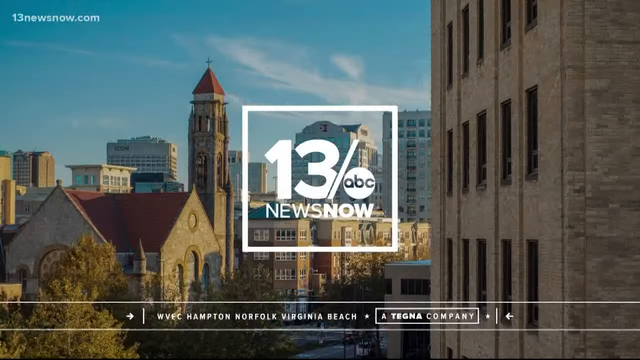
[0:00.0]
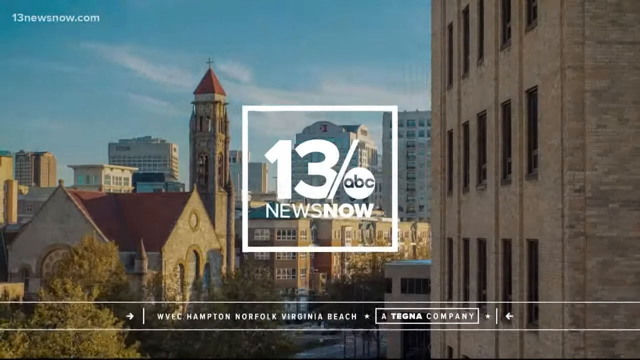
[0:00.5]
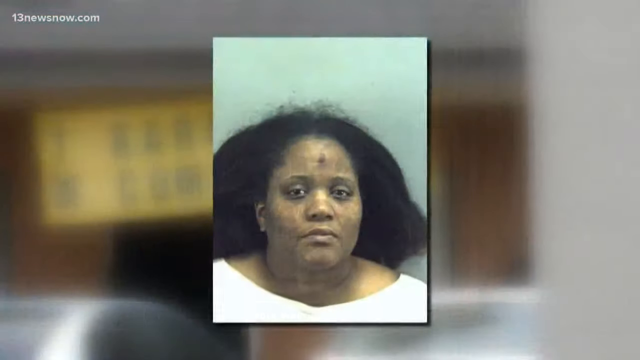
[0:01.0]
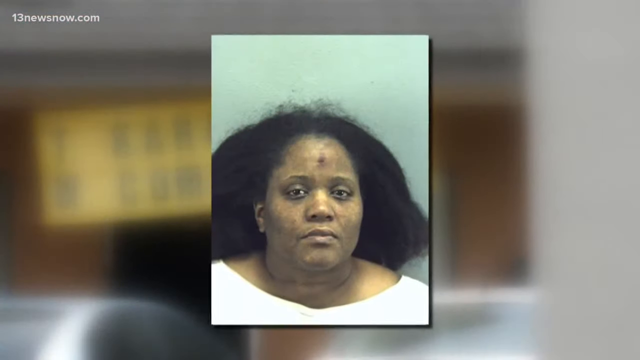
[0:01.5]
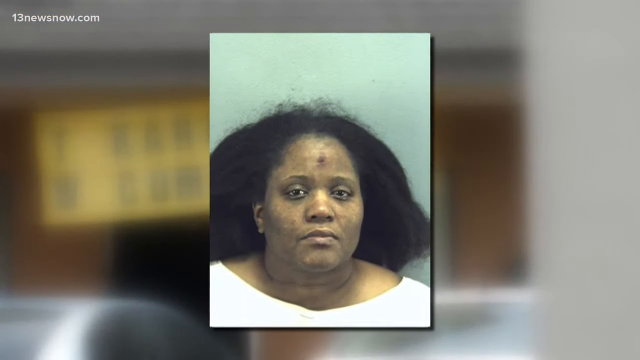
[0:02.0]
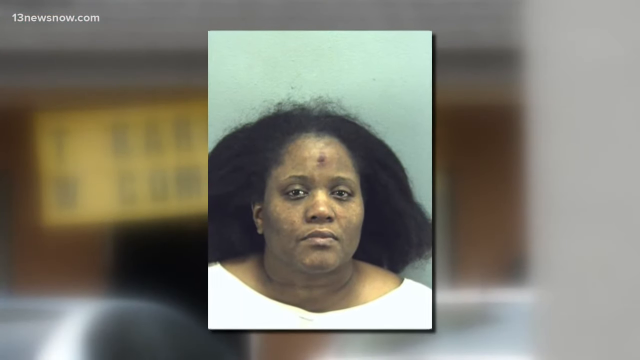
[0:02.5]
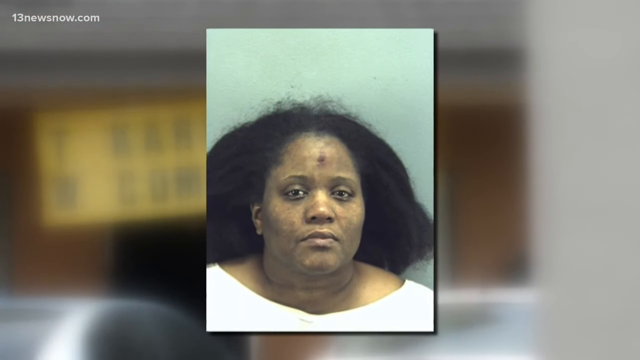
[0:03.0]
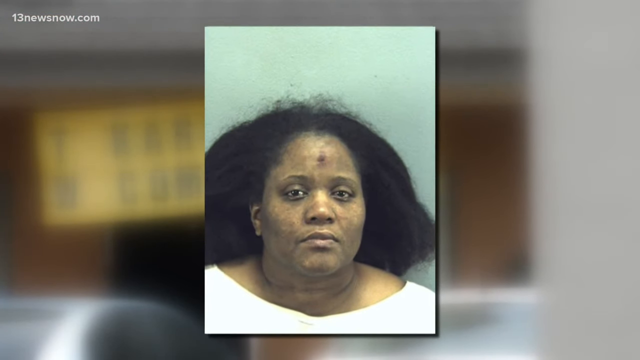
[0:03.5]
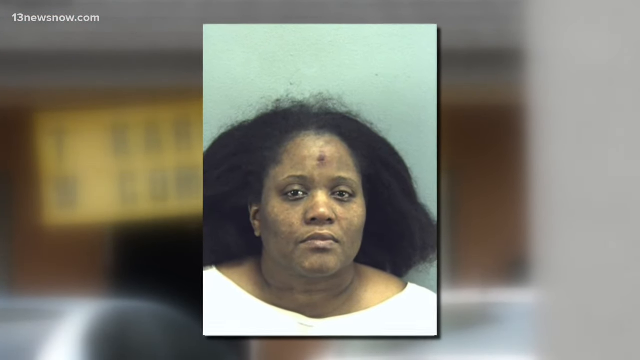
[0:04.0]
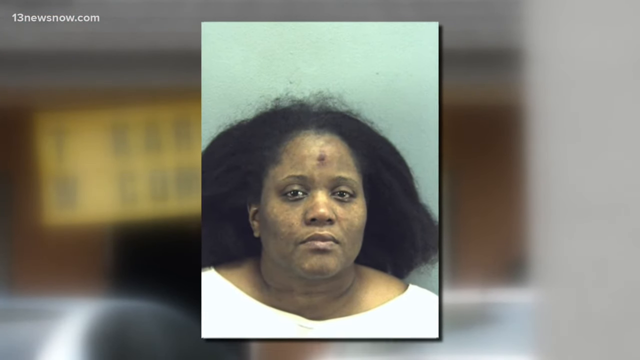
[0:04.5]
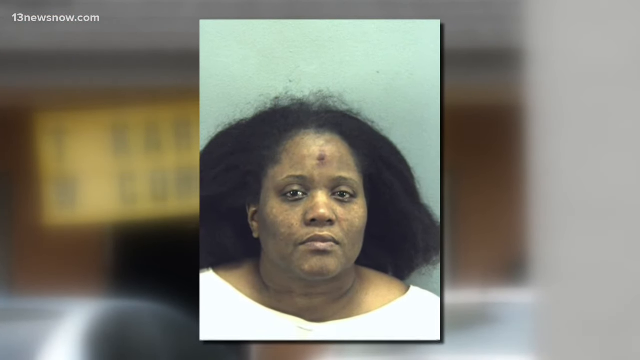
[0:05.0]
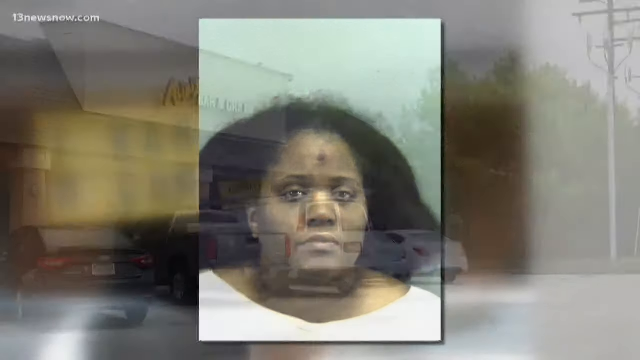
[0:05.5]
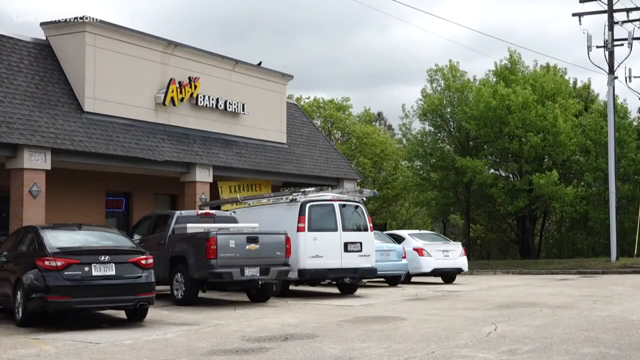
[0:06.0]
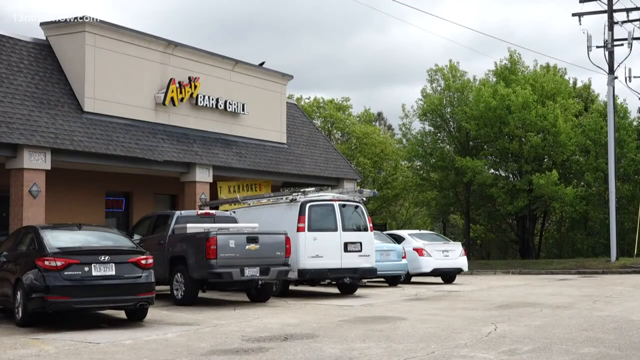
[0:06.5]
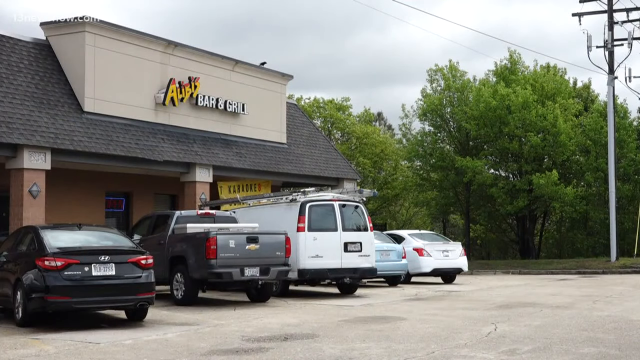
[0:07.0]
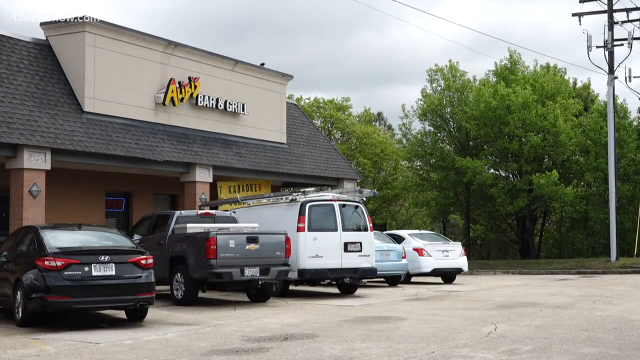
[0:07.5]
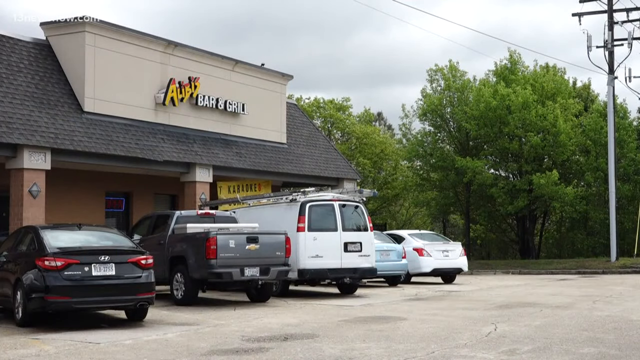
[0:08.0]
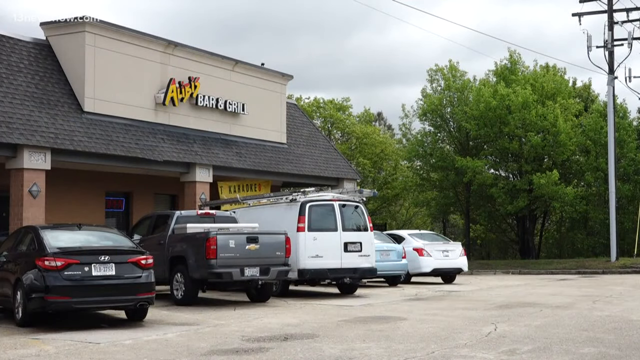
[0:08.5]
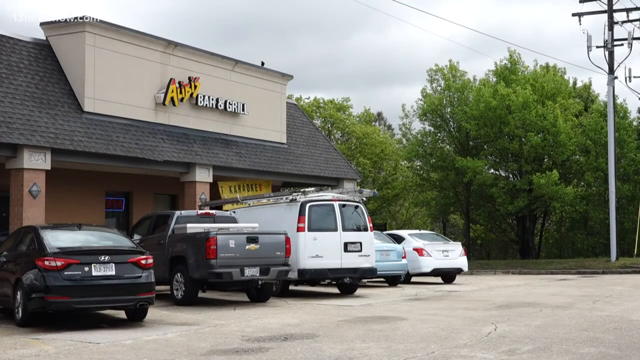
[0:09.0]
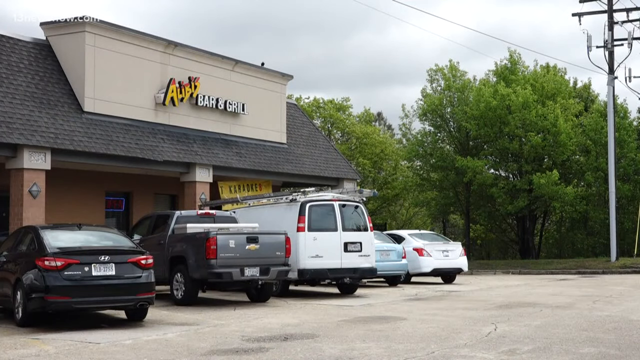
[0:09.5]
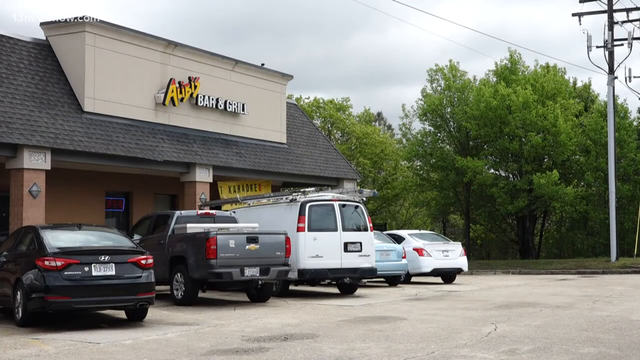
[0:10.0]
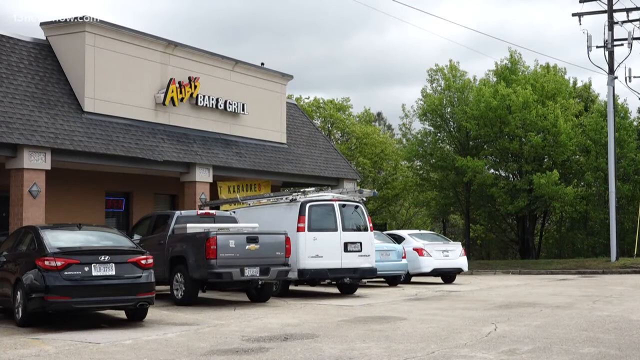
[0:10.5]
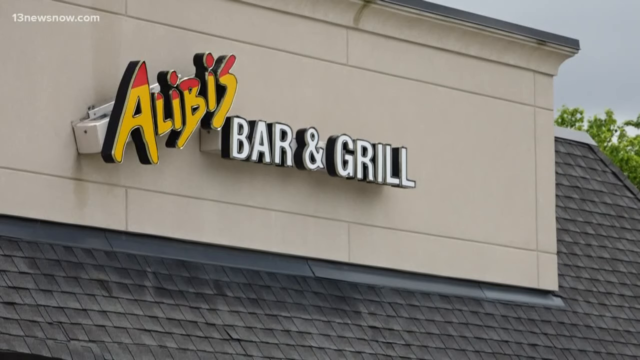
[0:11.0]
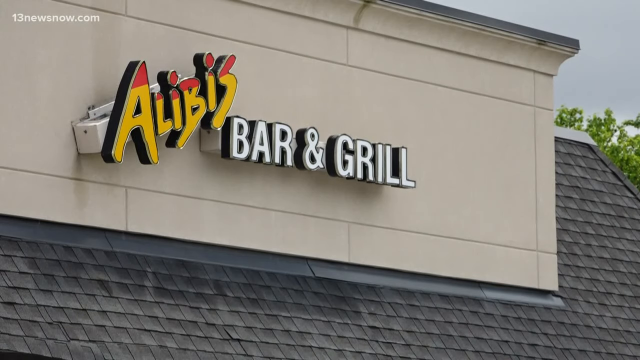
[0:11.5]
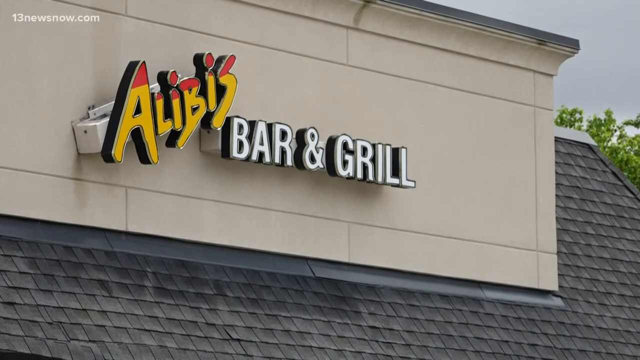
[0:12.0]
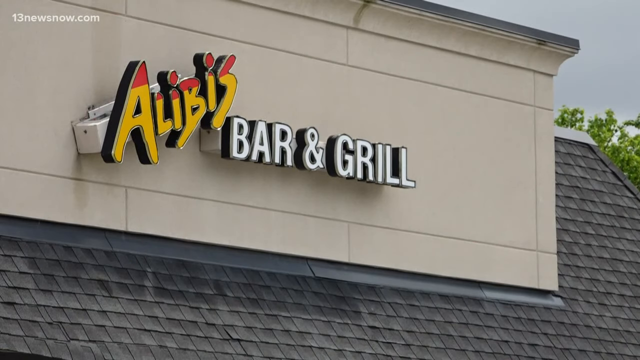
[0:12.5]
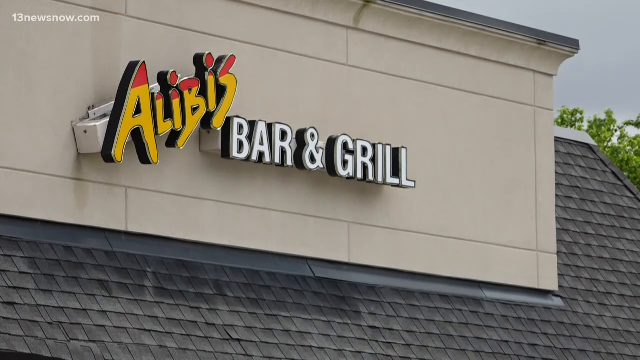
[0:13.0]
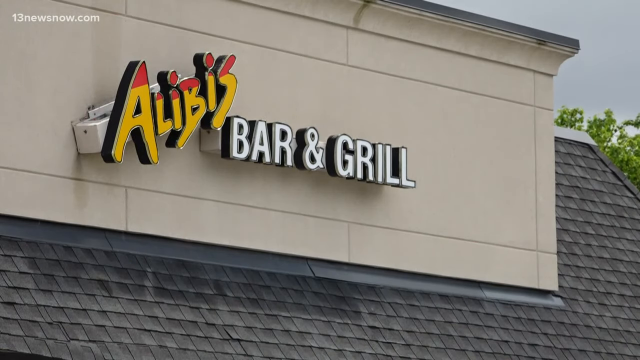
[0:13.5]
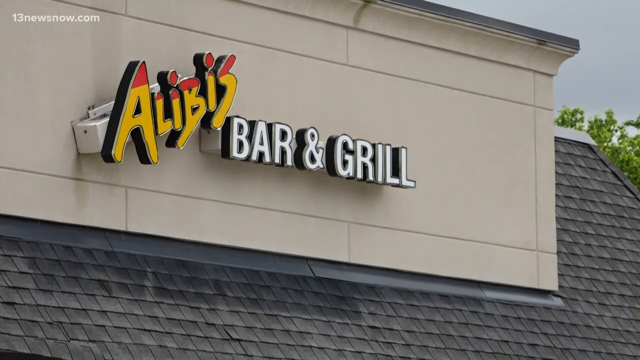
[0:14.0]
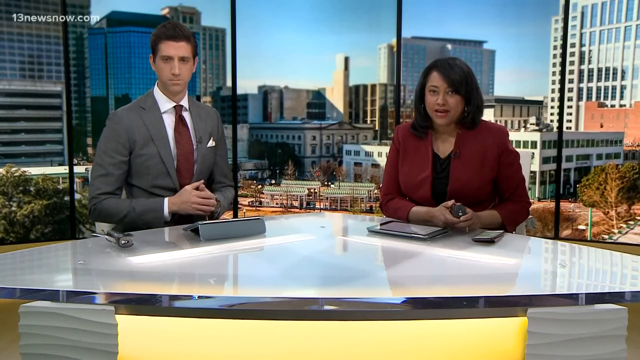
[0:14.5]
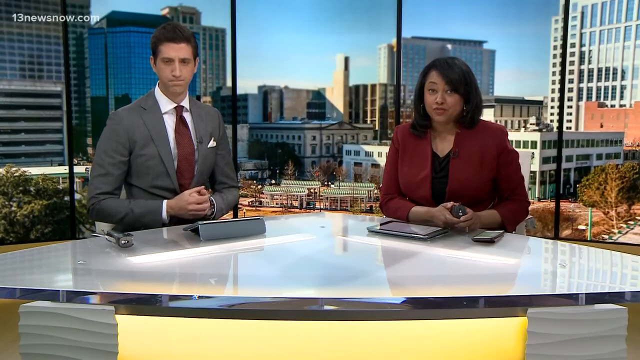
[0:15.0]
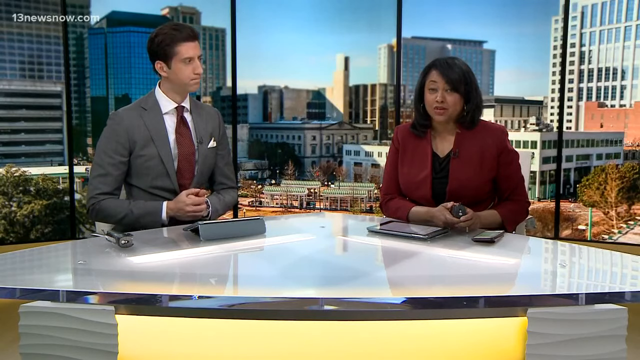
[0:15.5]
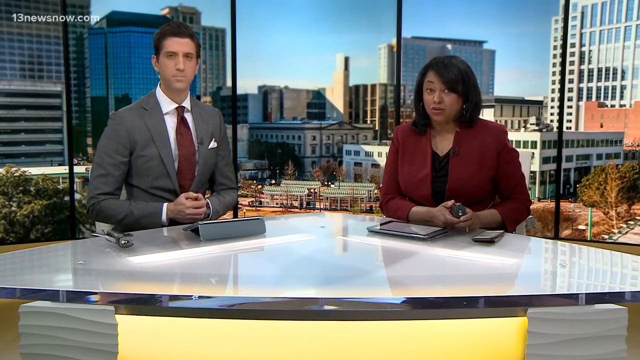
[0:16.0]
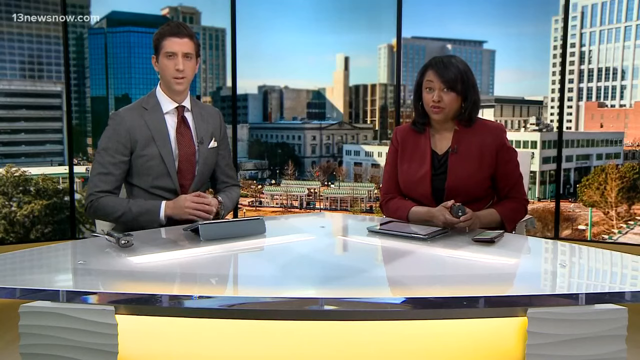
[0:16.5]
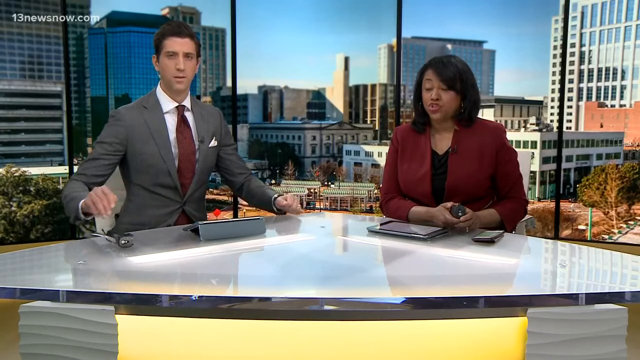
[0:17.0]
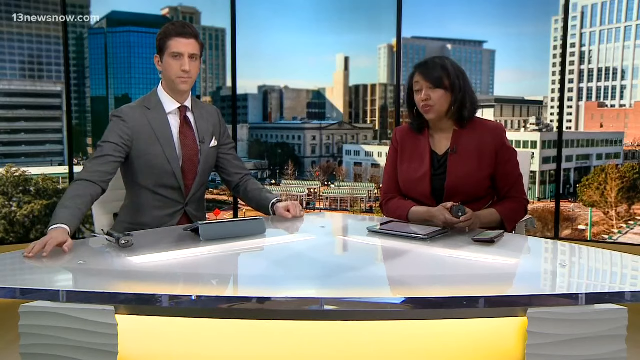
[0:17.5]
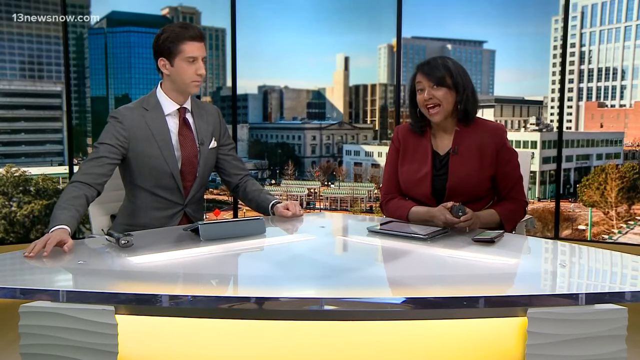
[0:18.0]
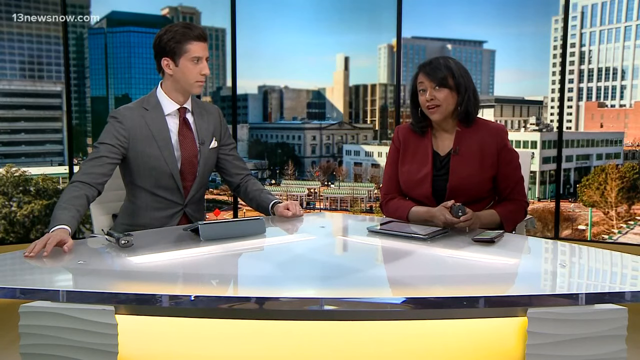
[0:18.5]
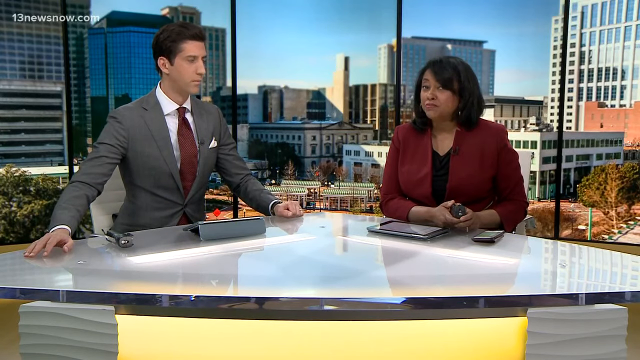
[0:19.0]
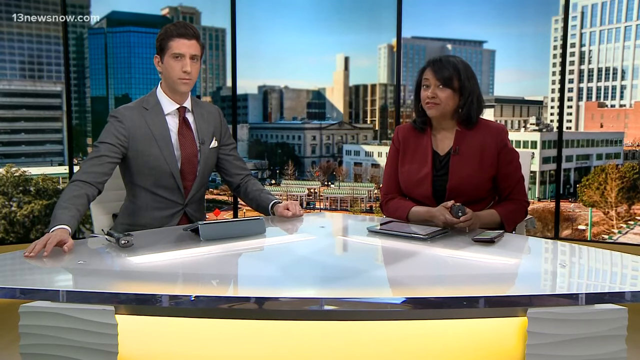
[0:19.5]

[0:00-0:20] This is a news clip from ABC13; the segment is News Now, and it is from WVEC Hampton North Folk Virginia Beach. It opens on a shot of a city on a sunny day with the skies moving. It then cuts to an unfocused background and what looks like a mugshot of a Black woman. Her hair is combed back, she has what looks like a red mark on her face, and she is a little heavyset. The camera zooms into the picture, then it cuts to video of Alibis Bar and Grill in a little strip center. Cars and trucks are parked outside, and there are some trees in the background. The word "Alibis" is written in a sideways font, mostly yellow with little red tips. There are five vehicles, including a black four-door gray truck, a white light service van, a silver car parked next to it that is partially obstructed, and a white four-door. Then there is a close-up of the sign over the building, which is sort of cream colored. The video then cuts to two reporters in the studio, seated at a sort of angled desk: a man on the left in a suit and a woman on the right.